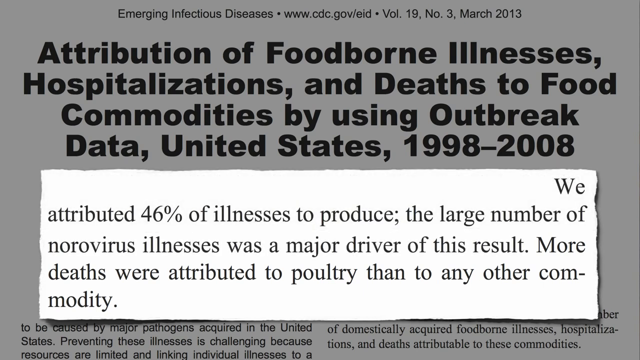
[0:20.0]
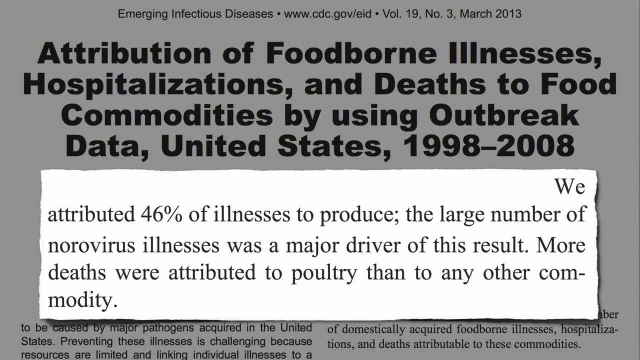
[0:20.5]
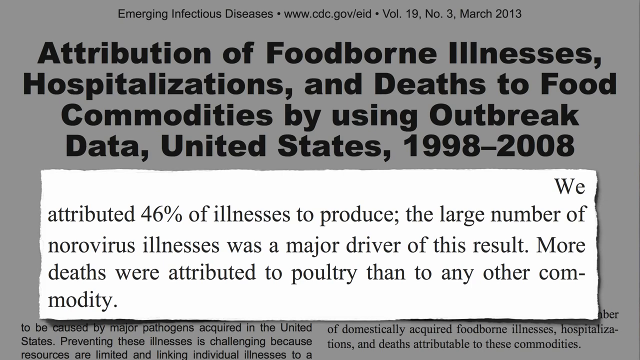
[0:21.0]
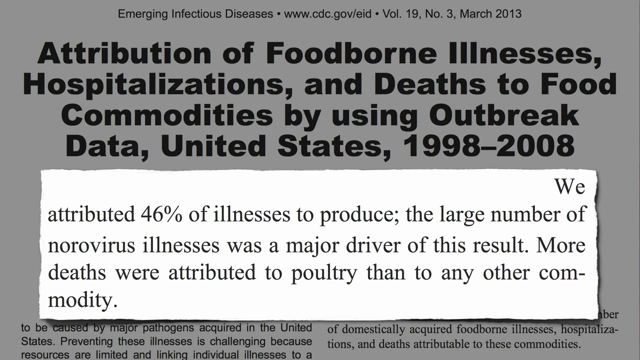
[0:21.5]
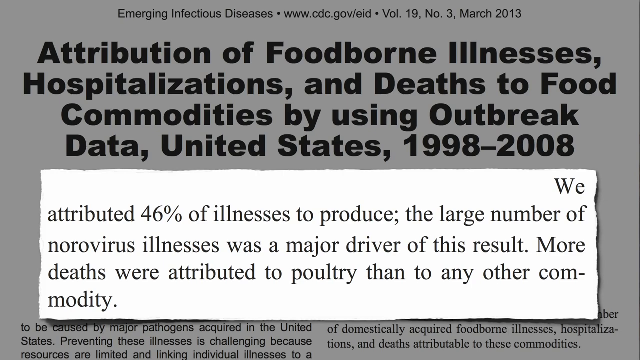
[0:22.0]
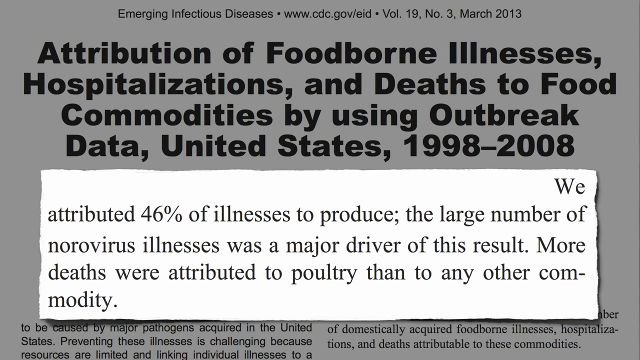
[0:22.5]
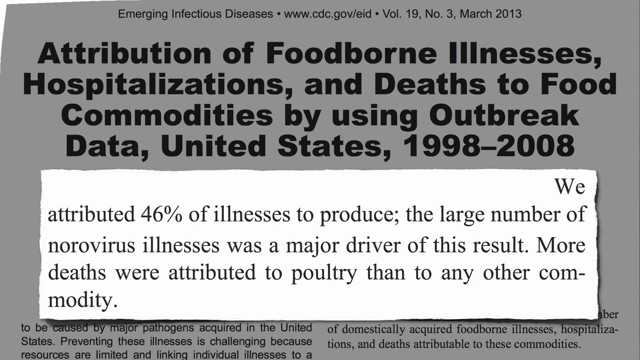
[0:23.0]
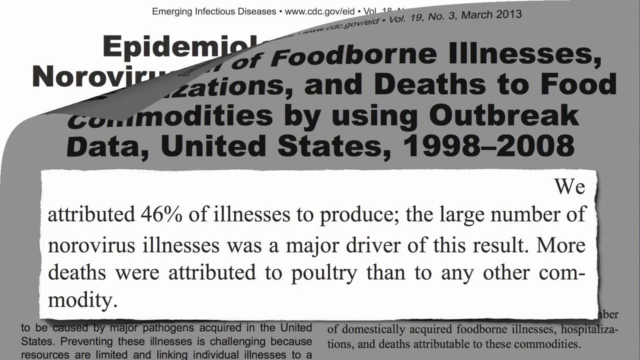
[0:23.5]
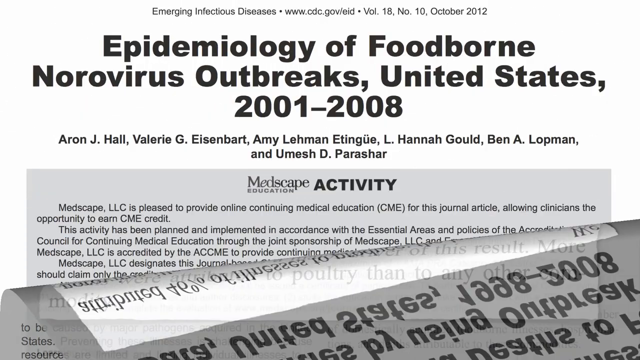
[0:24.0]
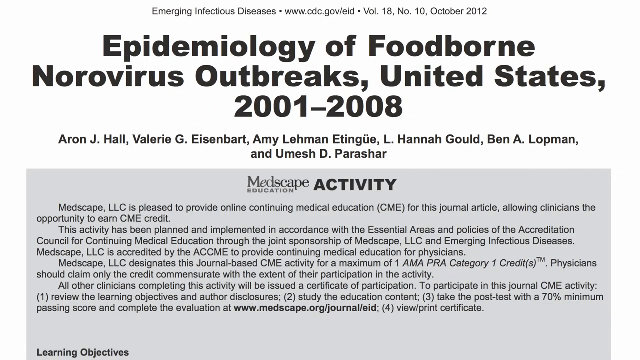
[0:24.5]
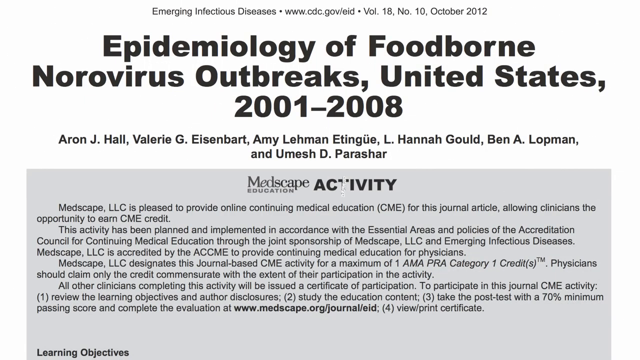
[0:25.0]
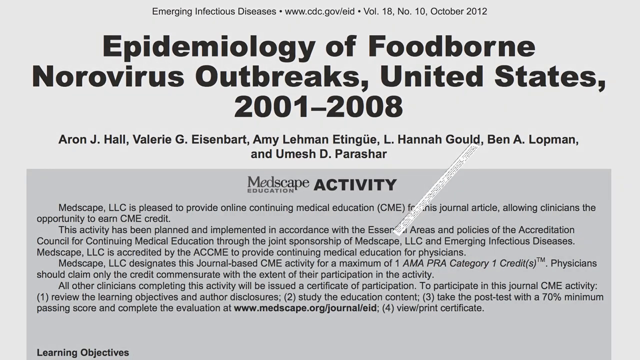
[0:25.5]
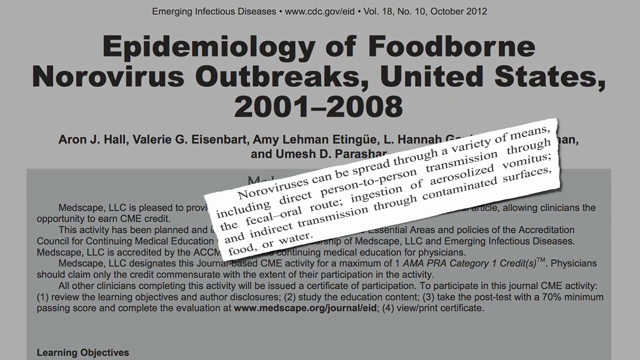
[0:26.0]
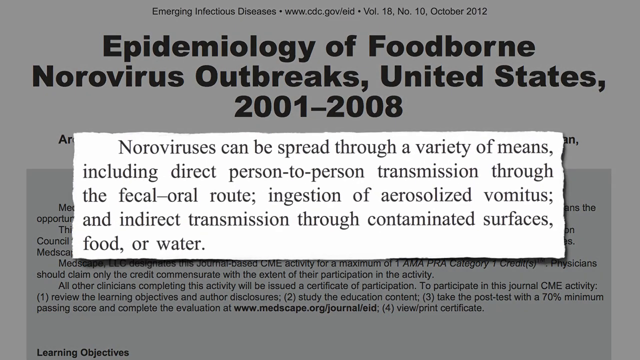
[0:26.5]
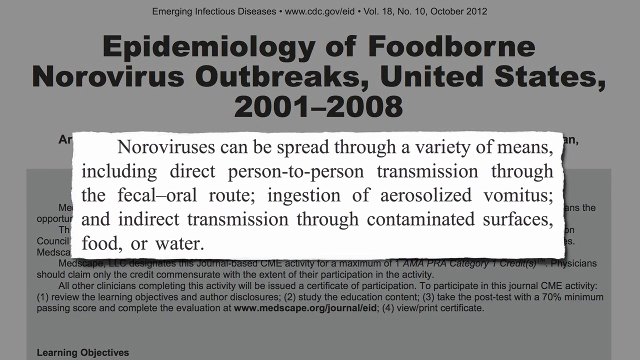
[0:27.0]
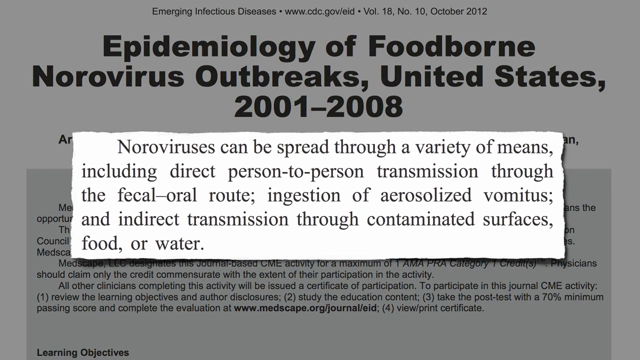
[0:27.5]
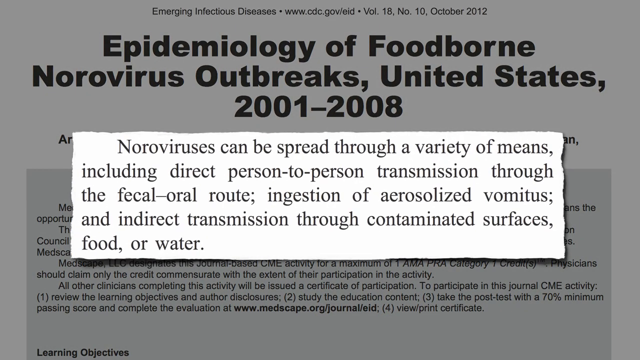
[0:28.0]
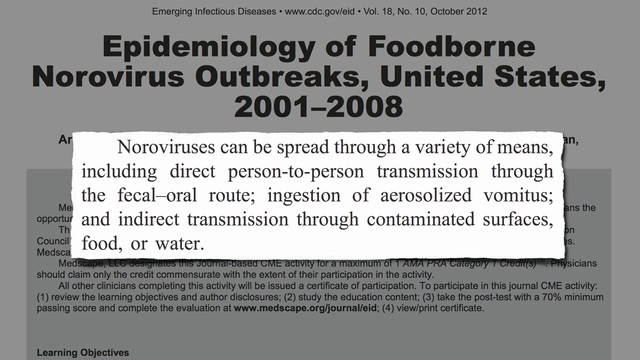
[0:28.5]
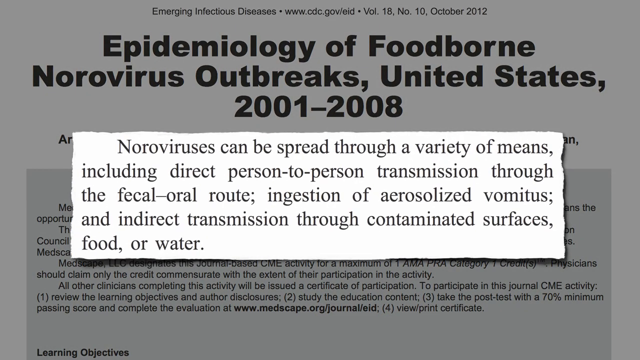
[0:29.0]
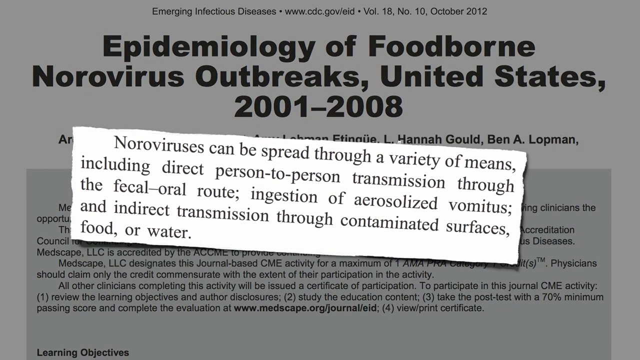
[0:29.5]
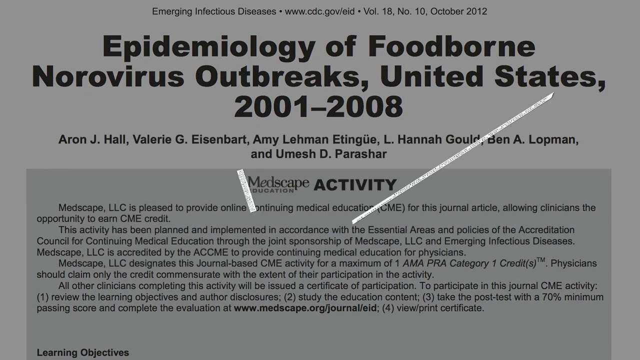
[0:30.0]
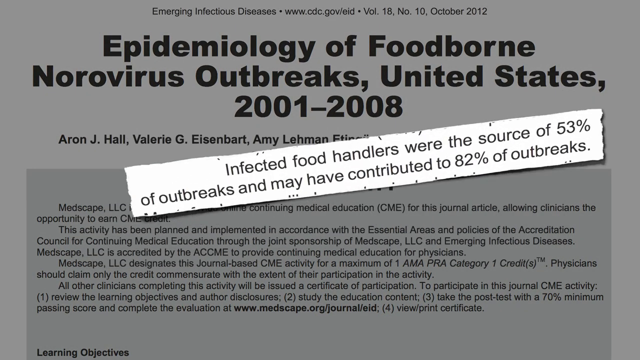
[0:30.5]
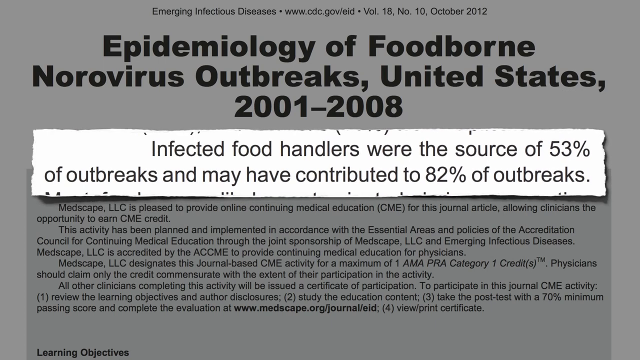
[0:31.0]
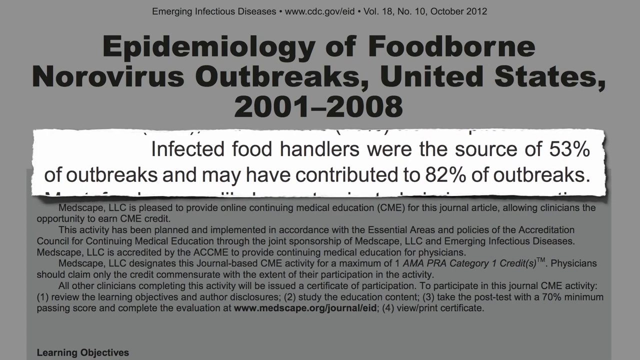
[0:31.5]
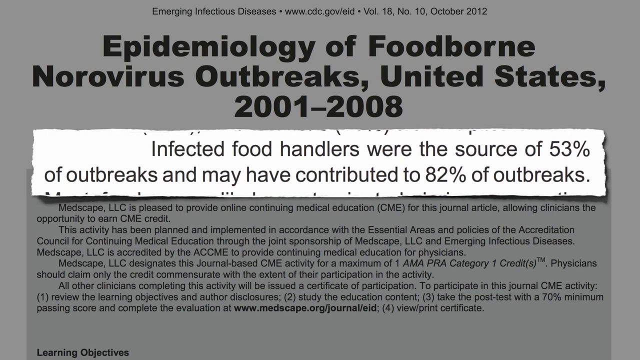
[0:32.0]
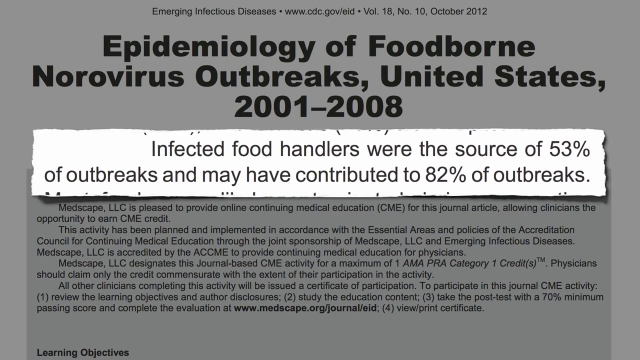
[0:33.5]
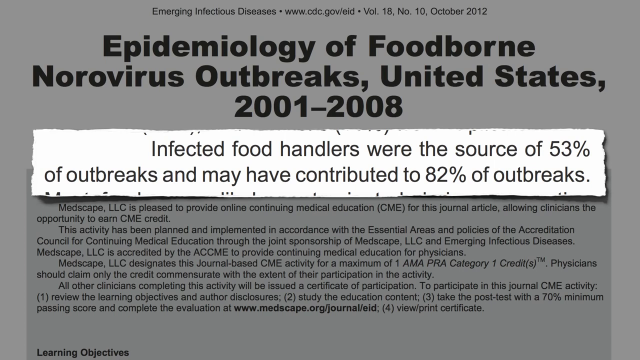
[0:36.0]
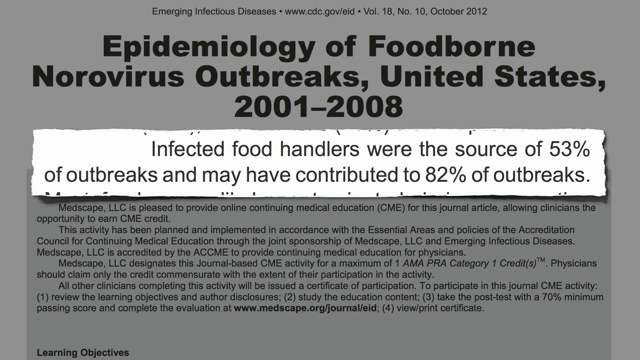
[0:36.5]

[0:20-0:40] Another article is shown, titled "The Epidemiology of Foodborne Norovirus Outbreaks, United States, 2001 to 2008." A quote flips open like a piece of paper and reads "noroviruses can be spread through a variety of means, including direct person-to-person transmission through the fecal-oral route, ingestion of aerosolized vomitus, and indirect transmission," continuing on to mention food or water. That quote flips away and another is pulled out like a piece of paper, reading "infected food handlers were the source of 53% of outbreaks and may have contributed to 82% of outbreaks." The quotes move from one to the next with fancy transitions. Based on the articles, this seems to concern work from around 2012 to 2013.